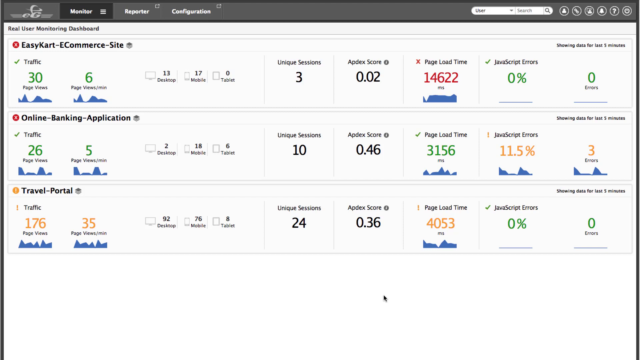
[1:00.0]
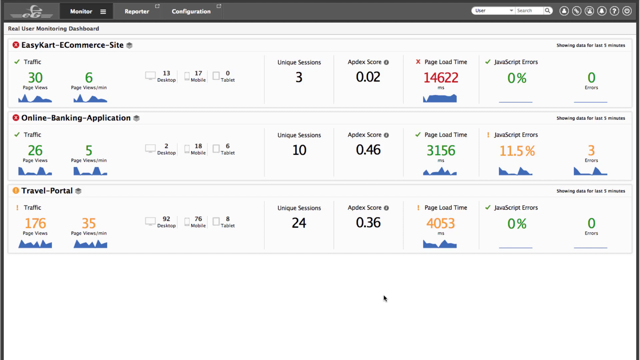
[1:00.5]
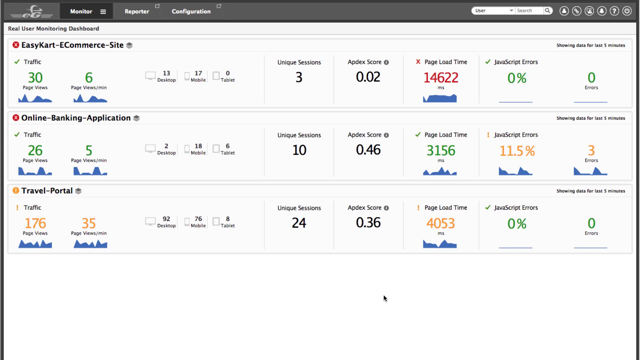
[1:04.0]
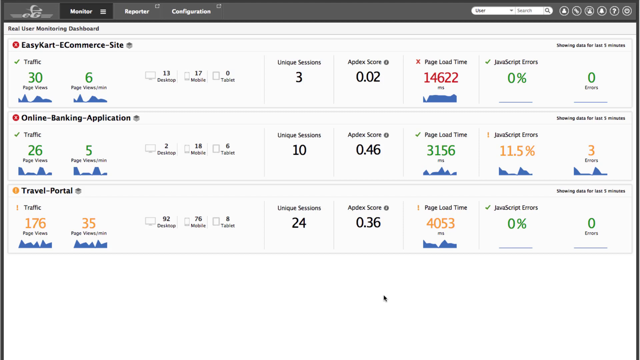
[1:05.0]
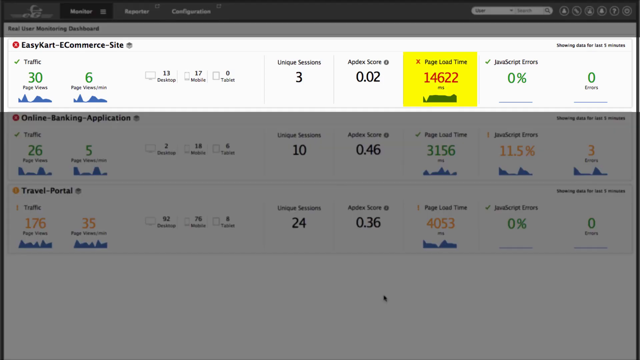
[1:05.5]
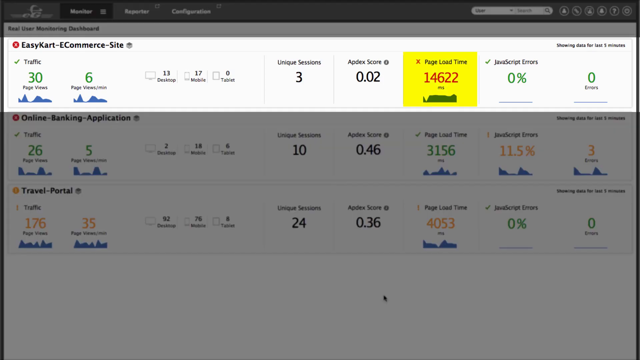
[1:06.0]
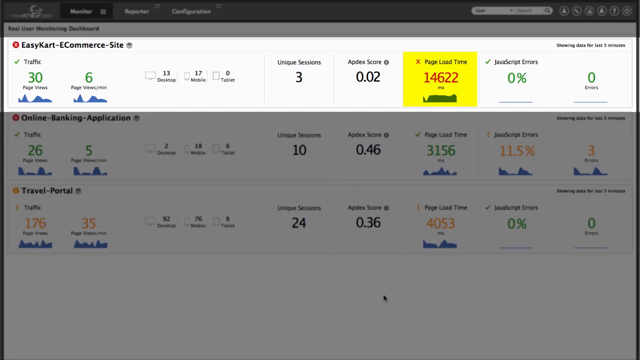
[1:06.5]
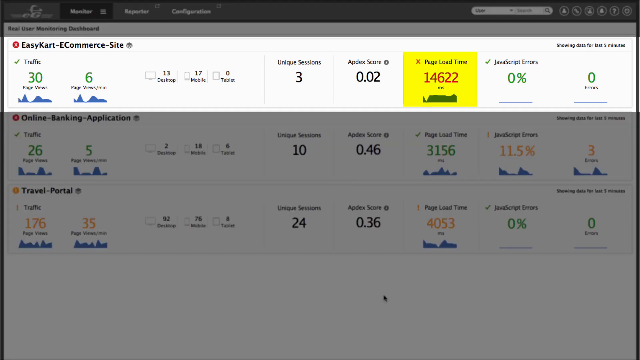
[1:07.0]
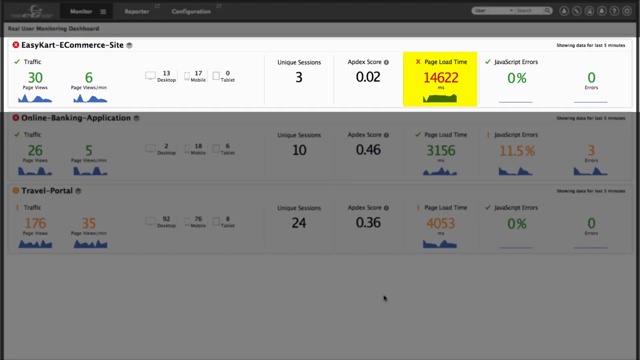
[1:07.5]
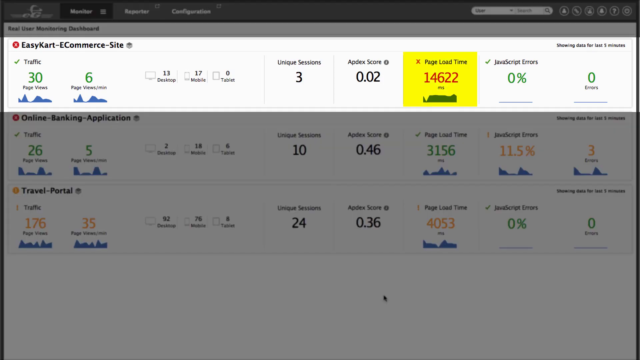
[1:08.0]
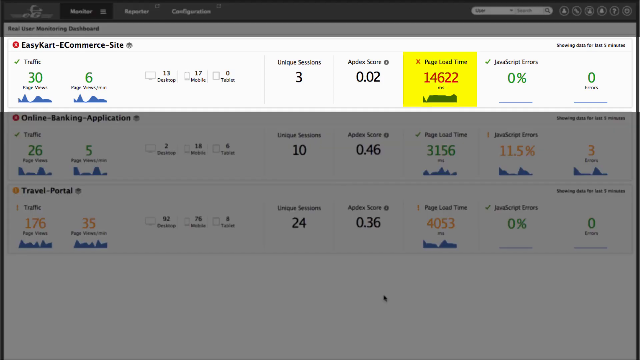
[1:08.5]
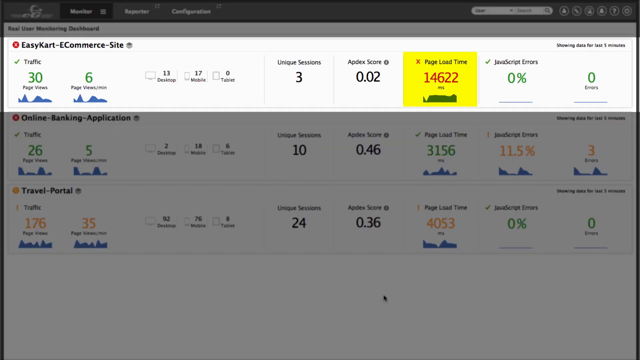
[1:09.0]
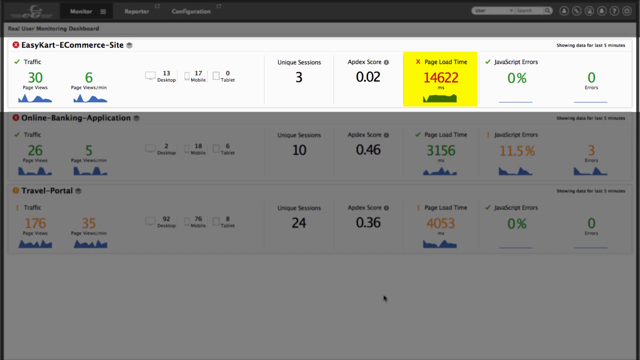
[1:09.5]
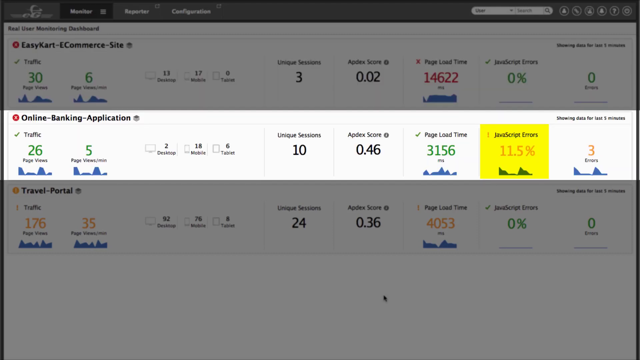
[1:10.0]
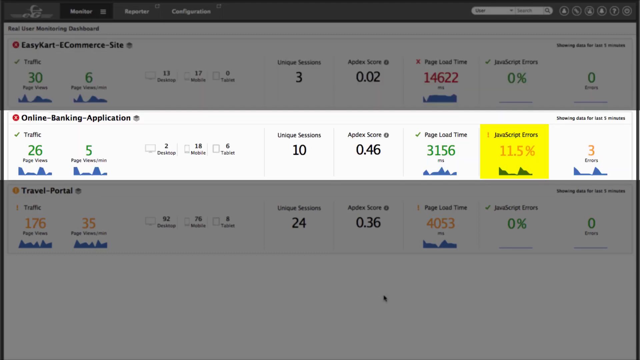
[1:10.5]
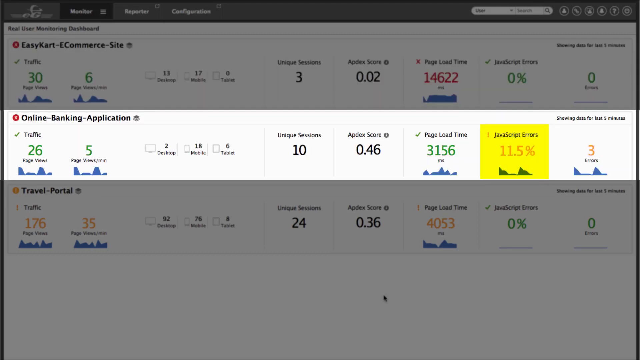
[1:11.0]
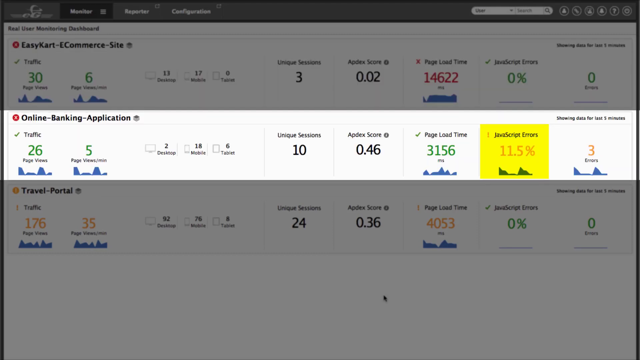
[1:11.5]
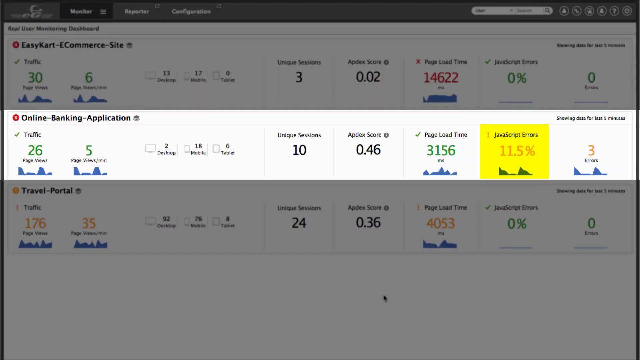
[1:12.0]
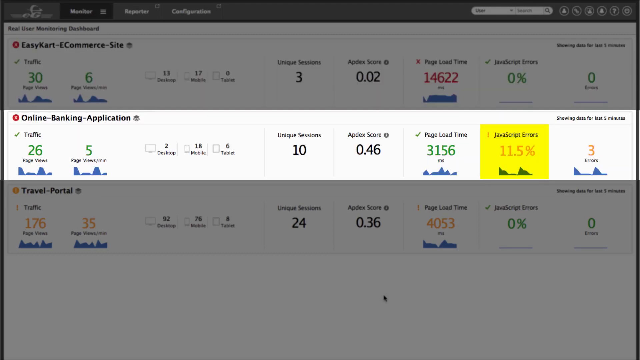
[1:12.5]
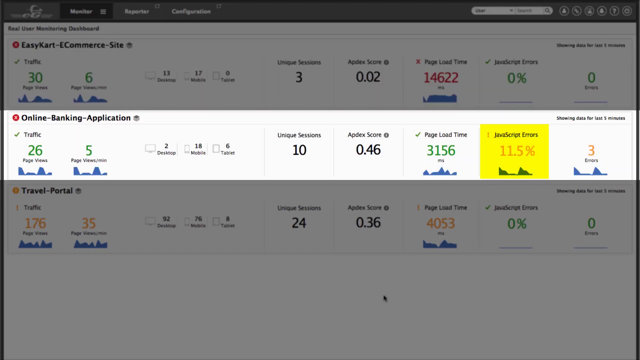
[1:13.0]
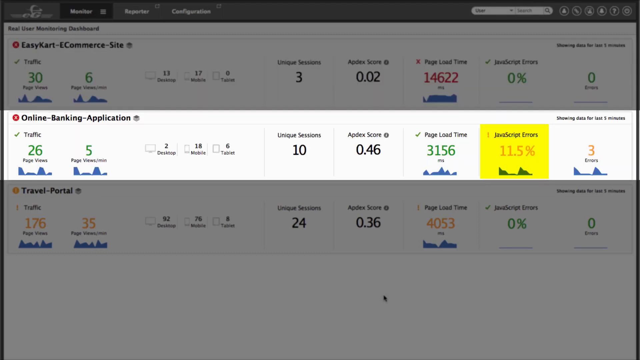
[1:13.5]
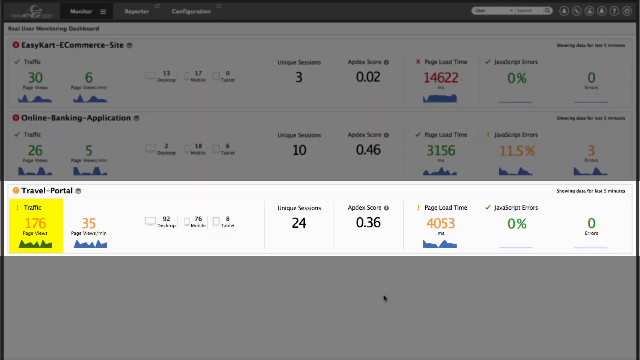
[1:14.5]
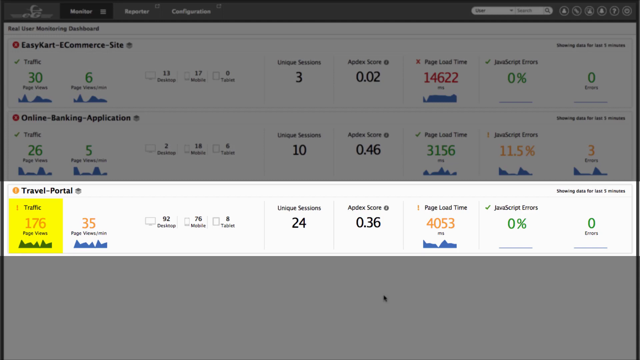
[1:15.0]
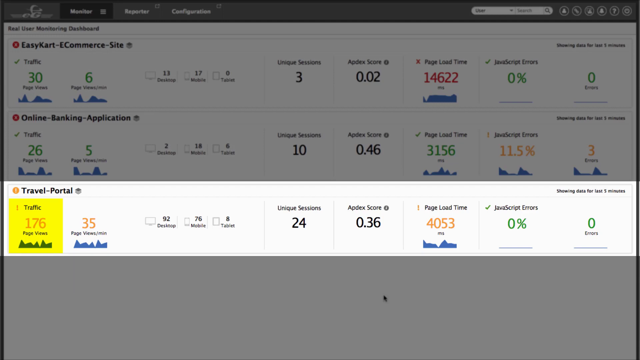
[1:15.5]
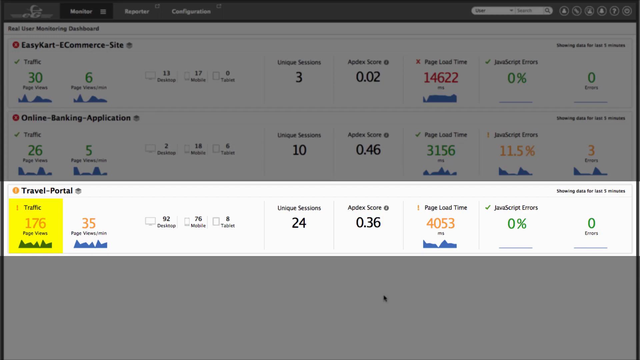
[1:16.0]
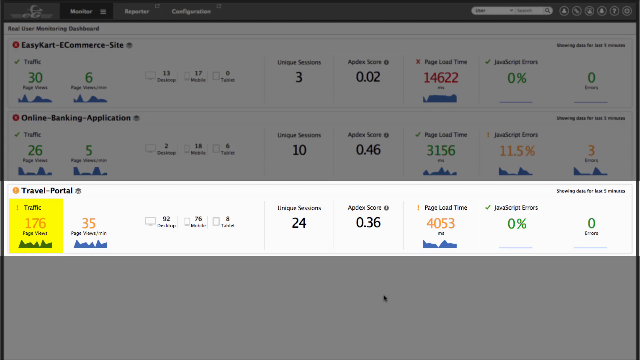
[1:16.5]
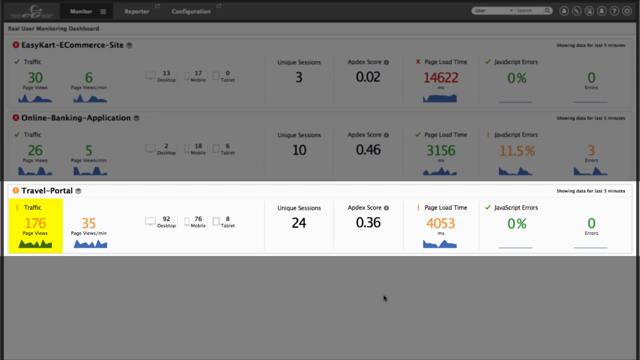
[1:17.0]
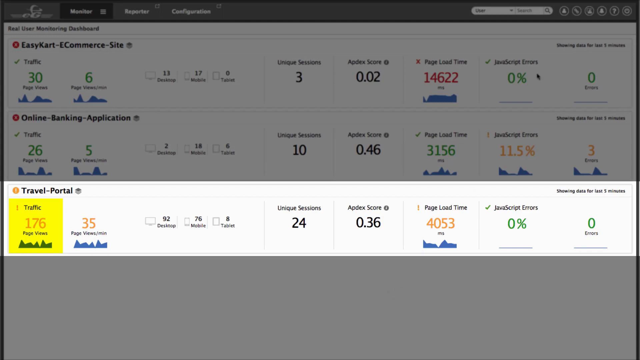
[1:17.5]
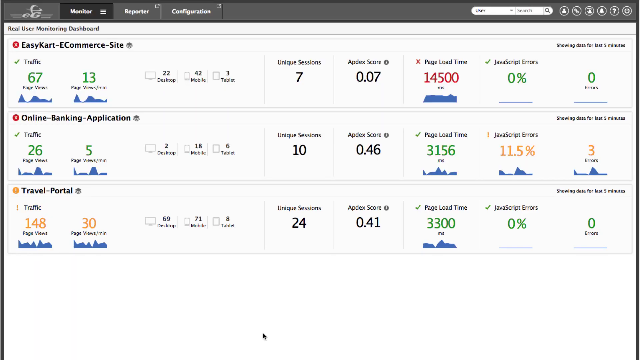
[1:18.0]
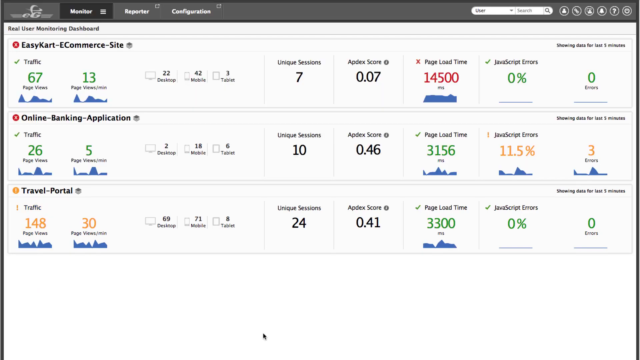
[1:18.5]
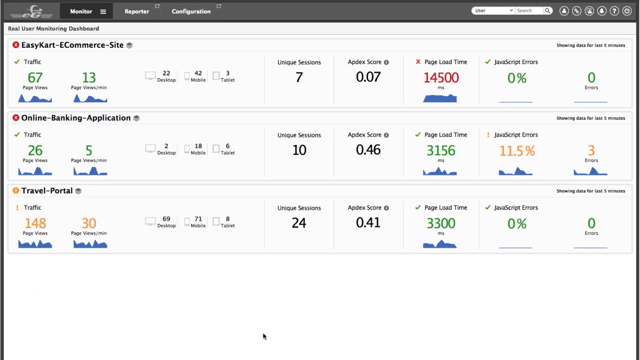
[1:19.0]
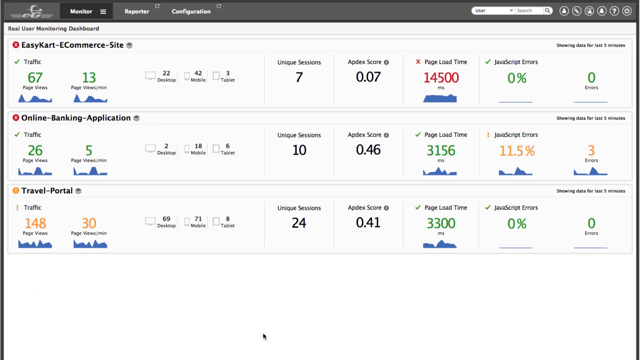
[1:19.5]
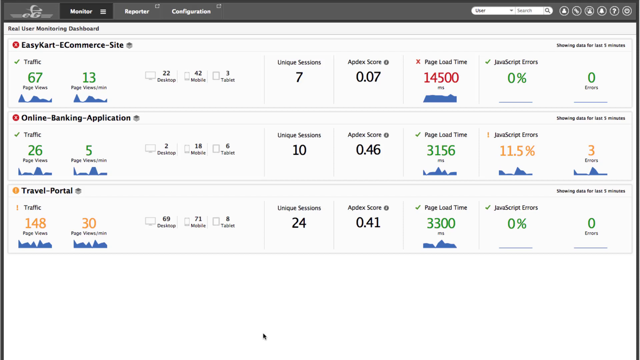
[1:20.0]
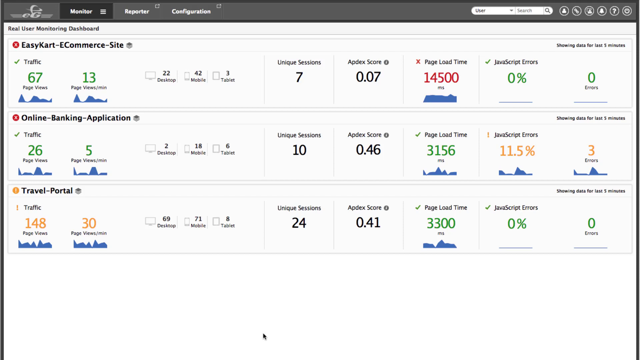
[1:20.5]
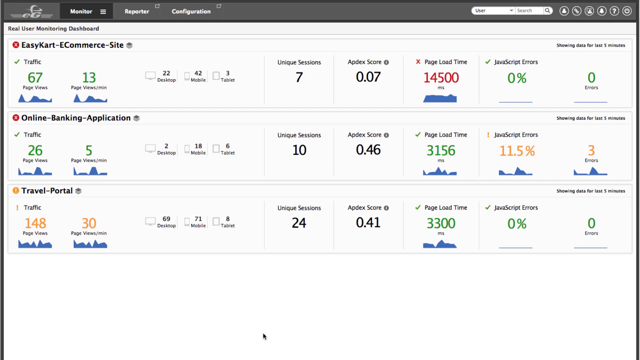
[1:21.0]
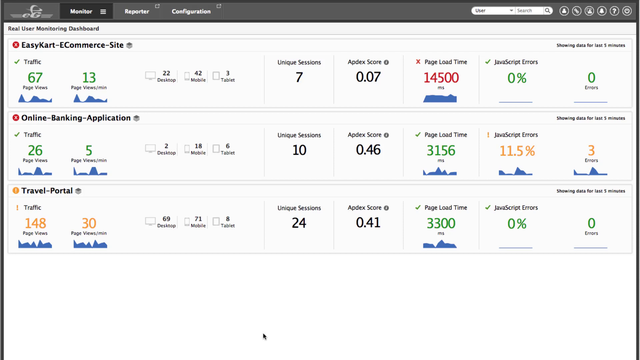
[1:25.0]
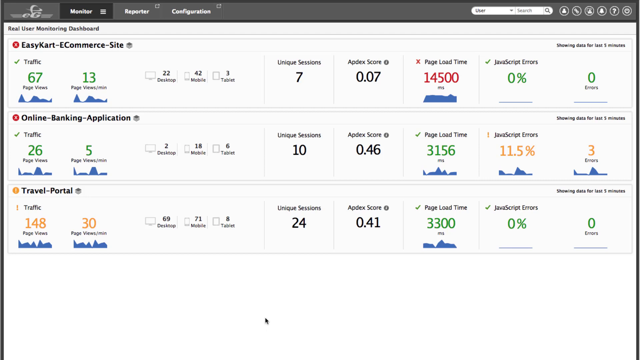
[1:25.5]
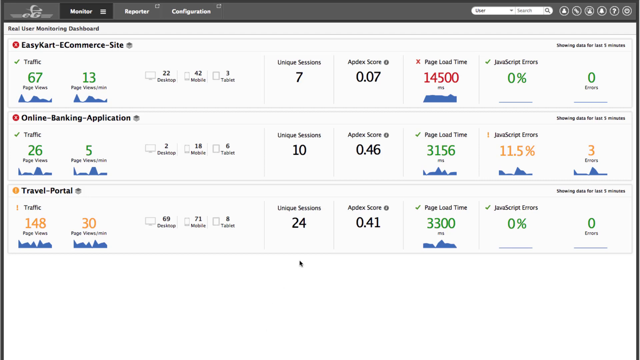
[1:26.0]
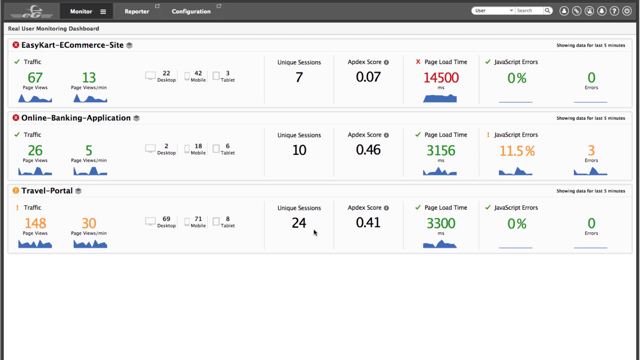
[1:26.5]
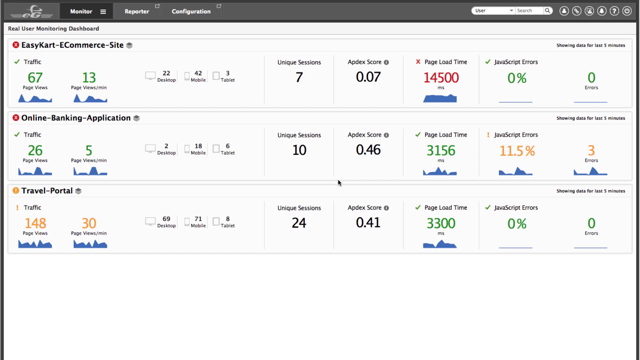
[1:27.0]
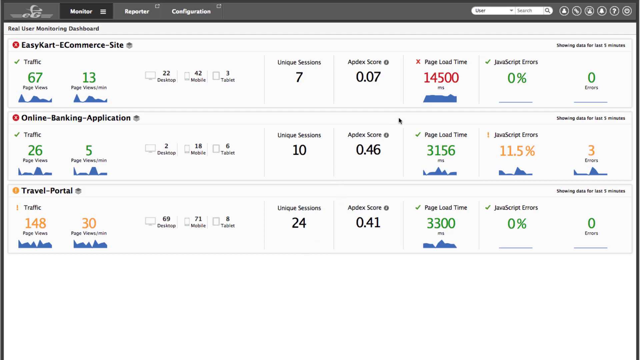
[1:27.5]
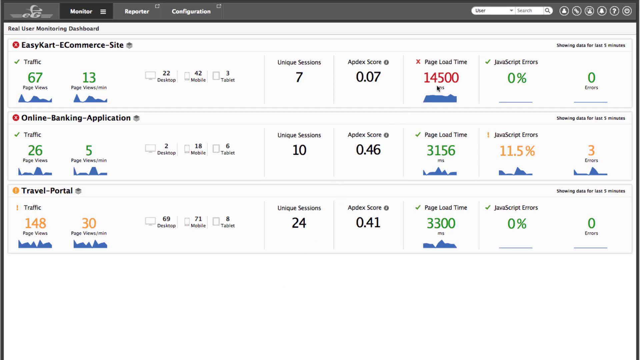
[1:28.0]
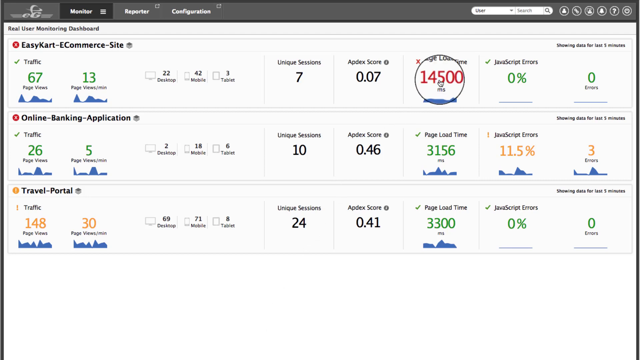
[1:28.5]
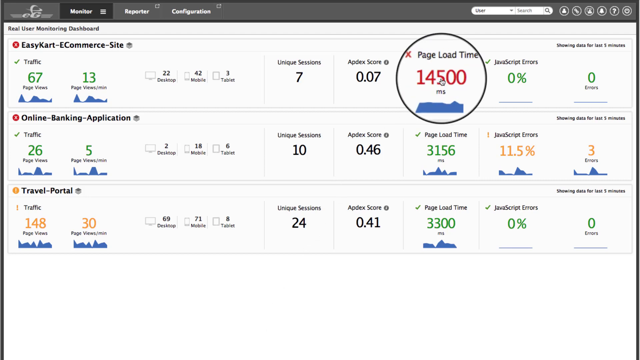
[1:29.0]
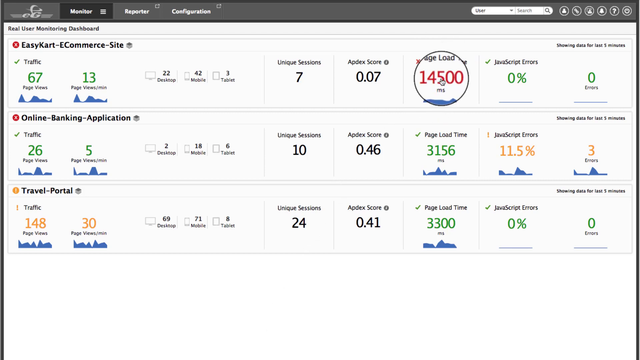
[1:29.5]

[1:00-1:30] The three sections of the Real User Monitoring Dashboard remain on screen. After a few seconds, the page becomes grayed out except for the top section, the EasyKart e-commerce site, which is highlighted in a rectangle and still displayed normally. Its page load time is highlighted in a yellow box, showing the number 14,622 in red. A few moments later, the highlight moves down to the online banking application in the same white rectangle, and this time its JavaScript error section is highlighted in a yellow box at 11.5%. A few moments after that, the travel portal section is highlighted, with its traffic area in a yellow box showing 176 page views. The page then returns to normal view with nothing highlighted. After several moments, a black mouse pointer emerges from the bottom of the screen, moves up to the center, and then slowly hovers toward the top right area for EasyKart, over the 14,500 page load time section in milliseconds. The view zooms in in a black circle.